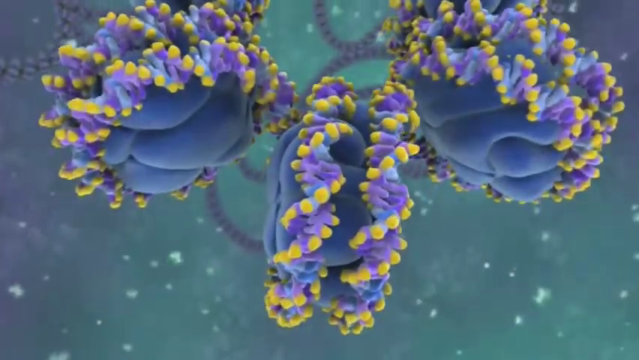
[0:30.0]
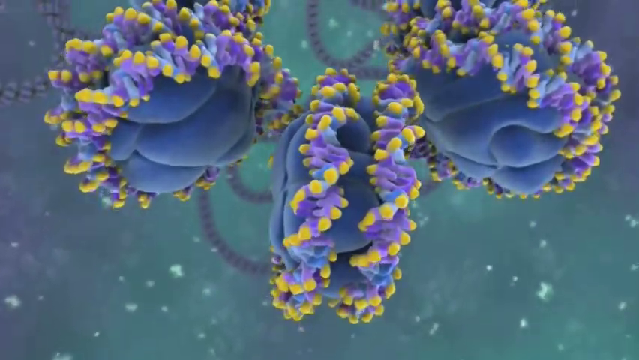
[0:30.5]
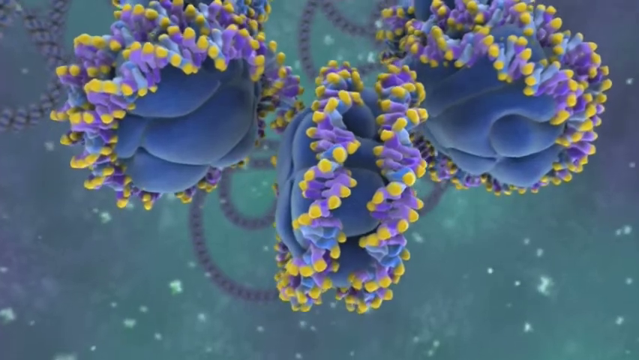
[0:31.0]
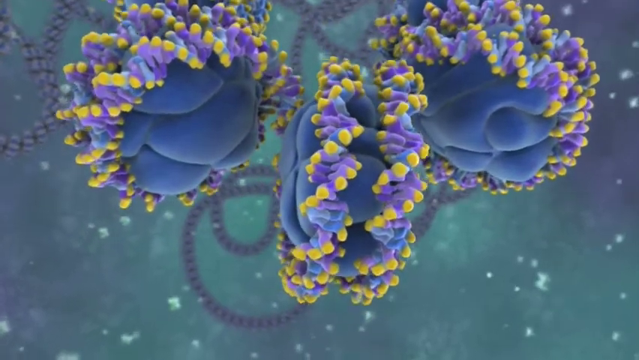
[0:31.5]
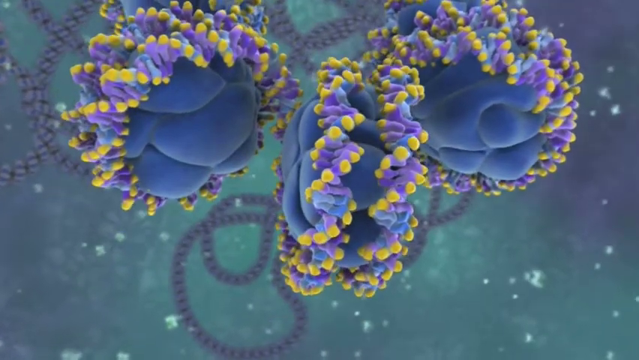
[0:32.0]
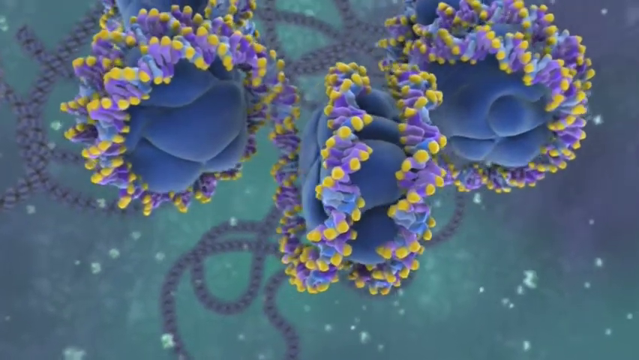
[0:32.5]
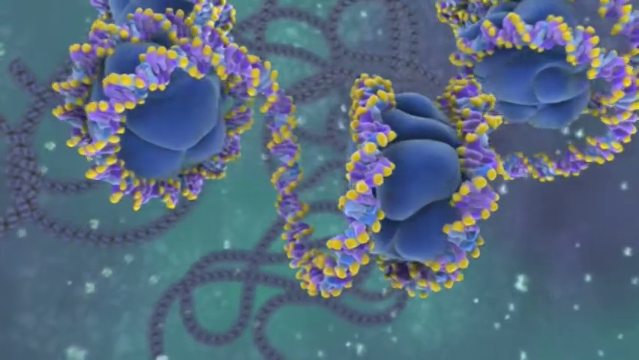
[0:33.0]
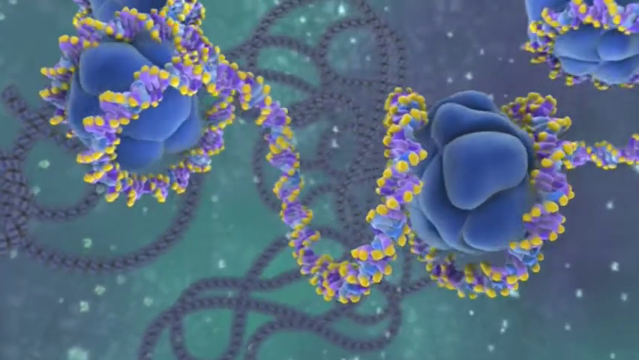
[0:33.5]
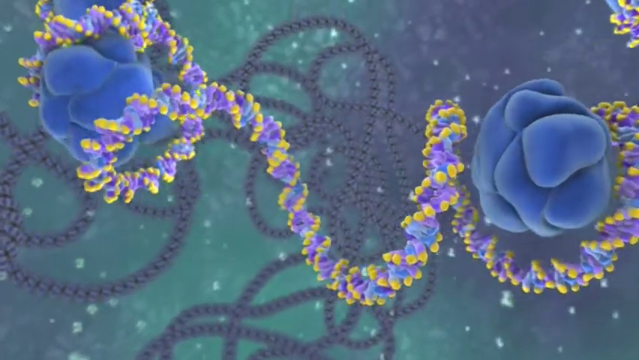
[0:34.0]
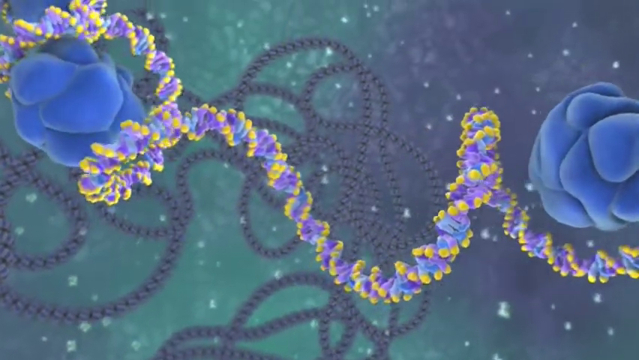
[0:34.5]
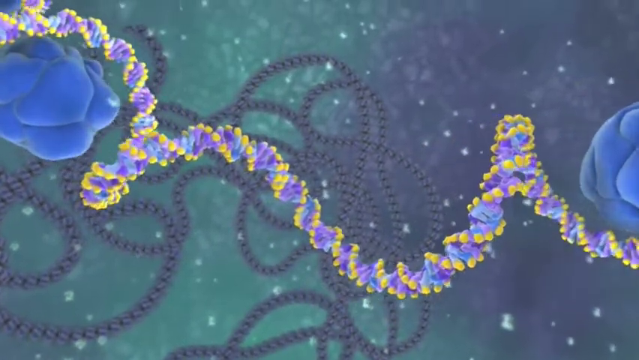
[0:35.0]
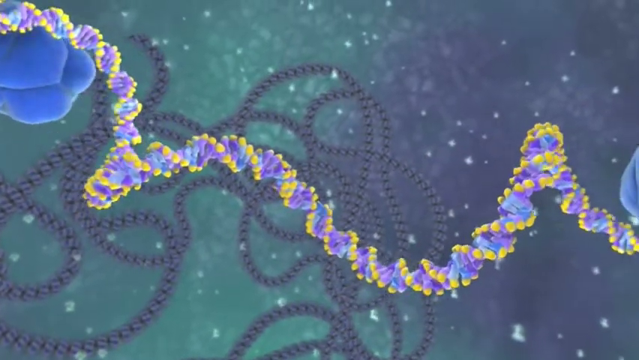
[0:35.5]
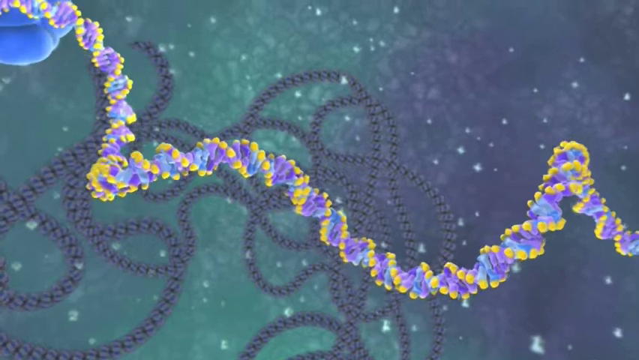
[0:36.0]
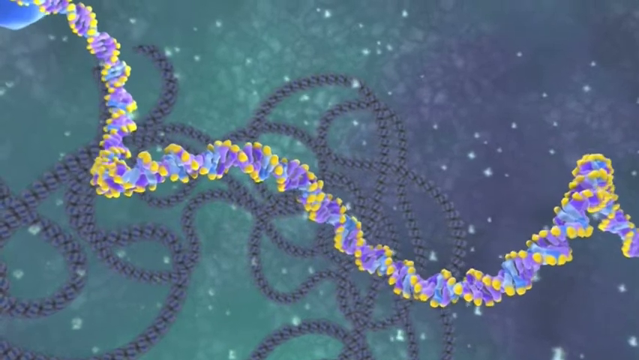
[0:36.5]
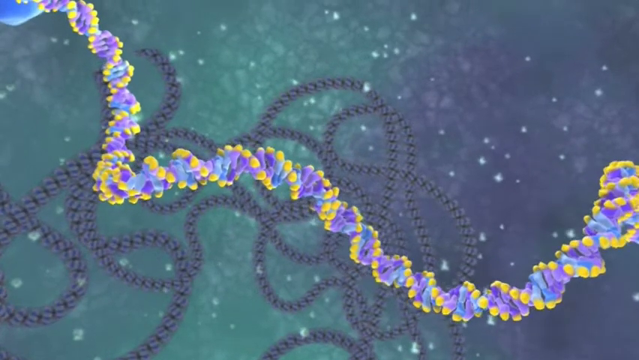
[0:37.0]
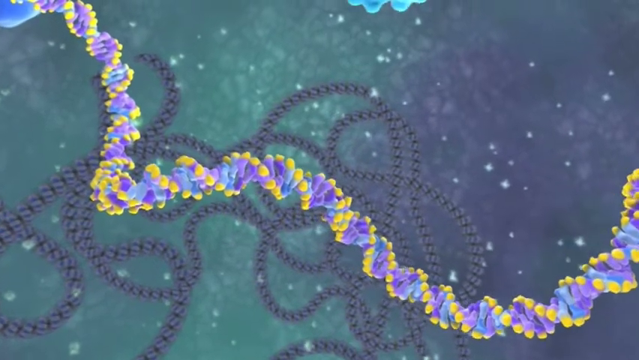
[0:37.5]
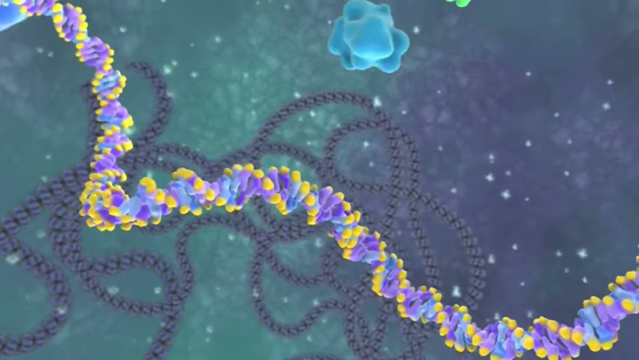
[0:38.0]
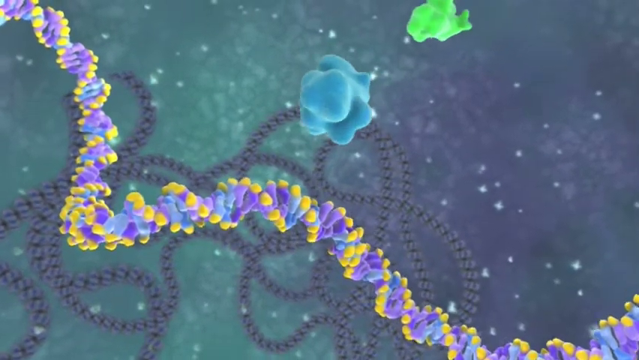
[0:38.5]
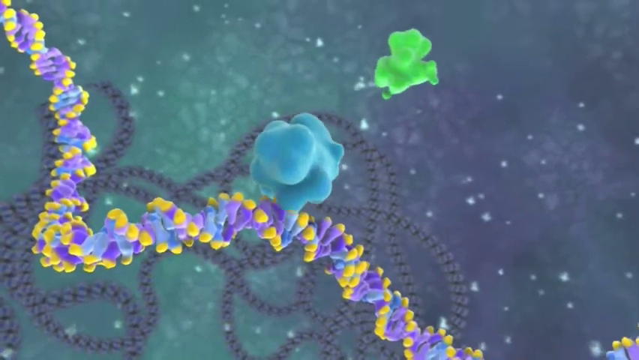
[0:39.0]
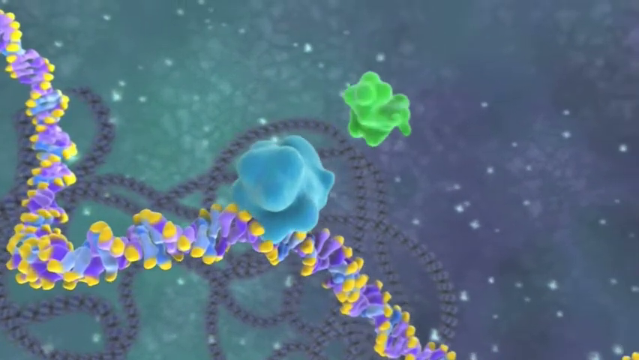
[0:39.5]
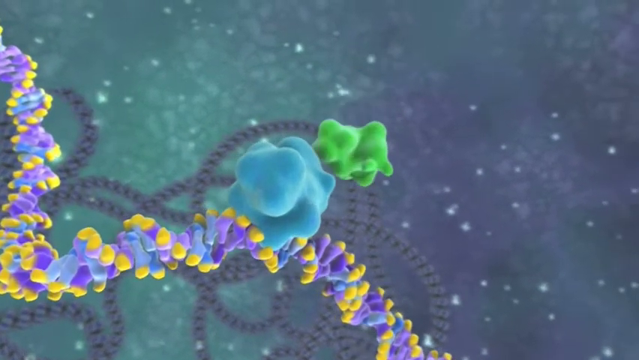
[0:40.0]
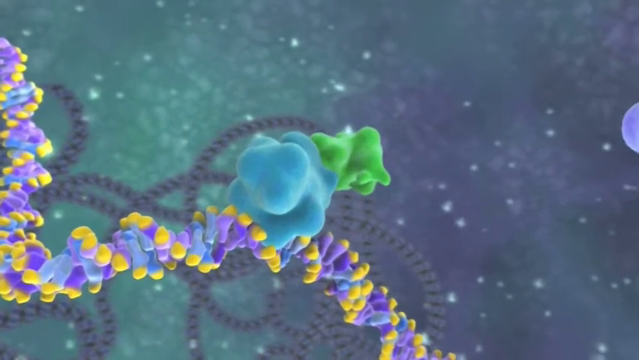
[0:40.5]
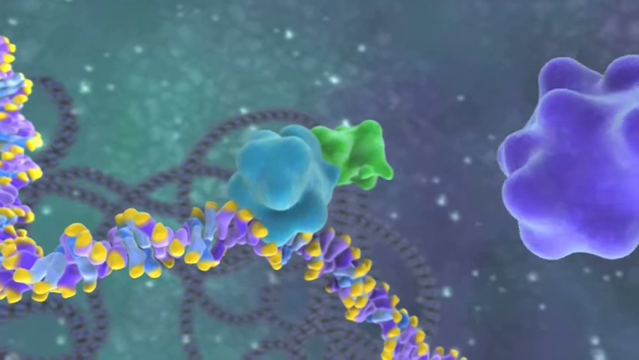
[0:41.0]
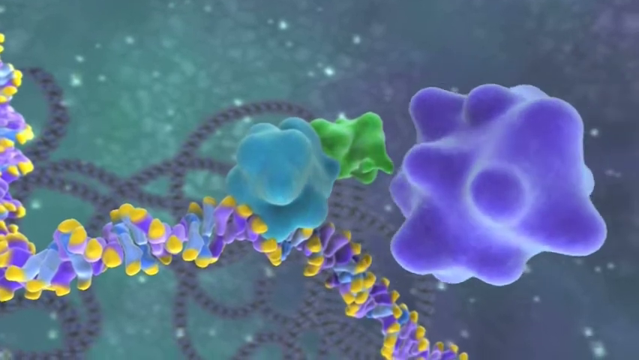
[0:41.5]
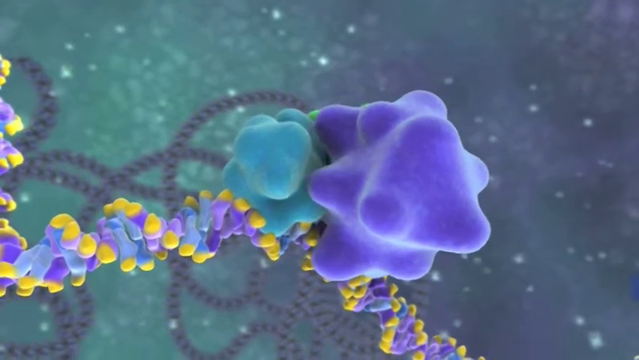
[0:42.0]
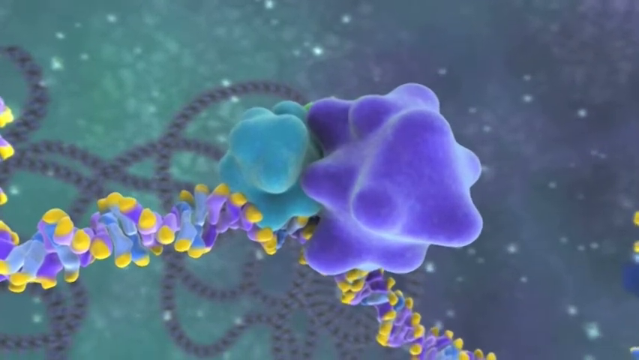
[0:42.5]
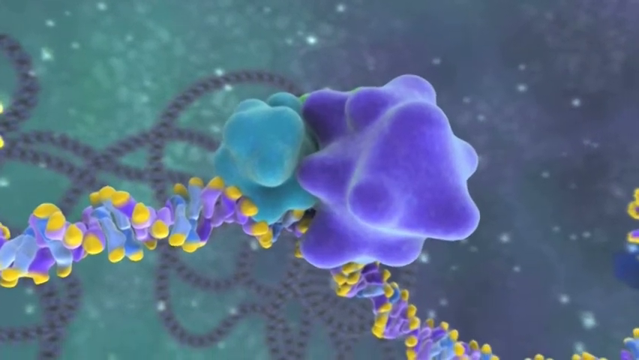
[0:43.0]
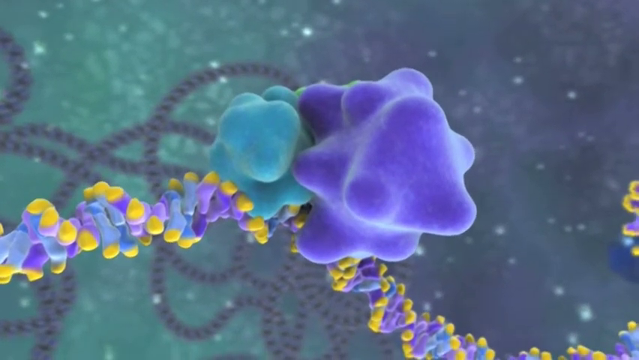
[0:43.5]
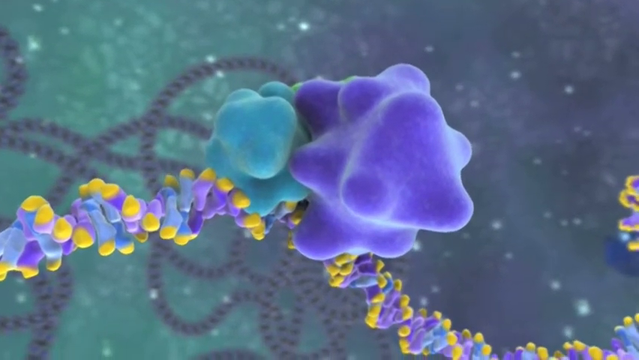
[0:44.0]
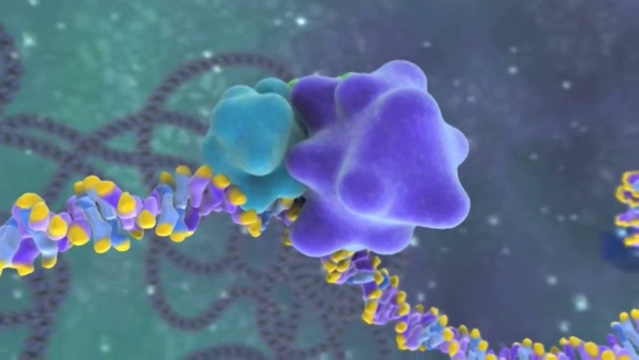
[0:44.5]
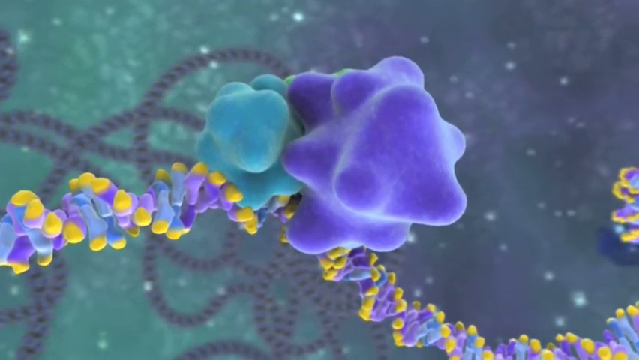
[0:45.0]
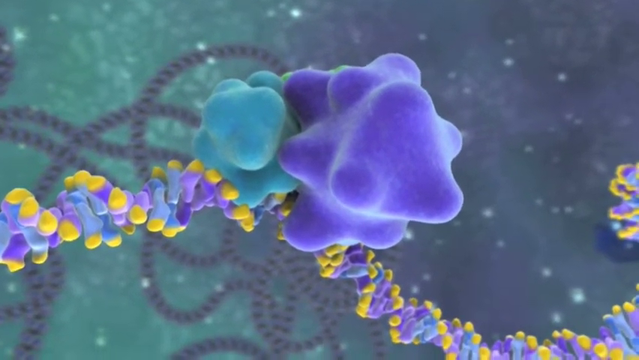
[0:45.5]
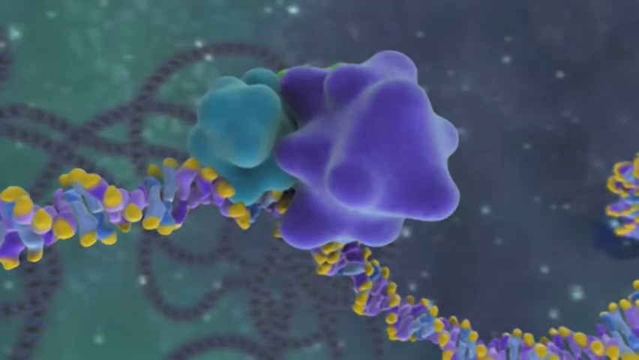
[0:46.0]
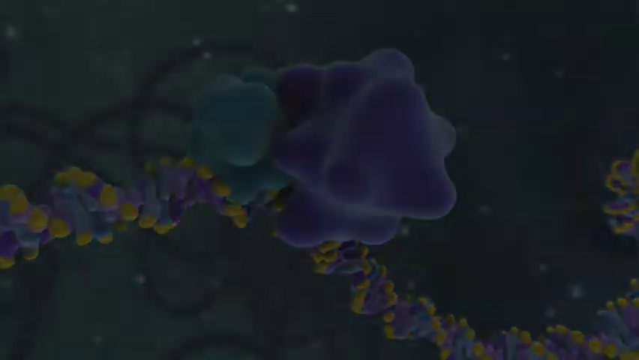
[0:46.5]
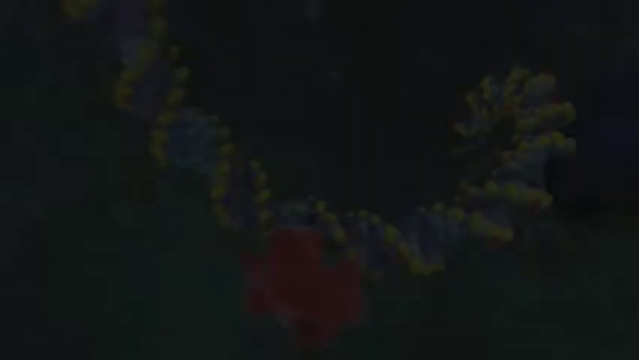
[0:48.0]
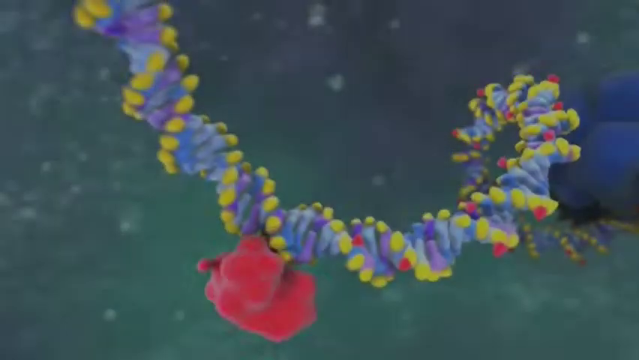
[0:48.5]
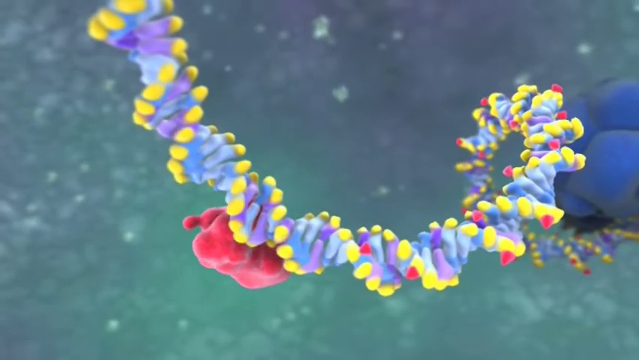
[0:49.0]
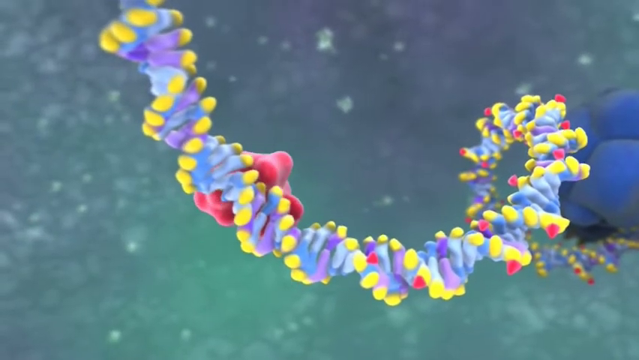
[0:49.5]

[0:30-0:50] A long, coiling, purple, rope-like structure has what are almost like mini yellow balls wrapping diagonally around it in a kind of spiral fashion, and blue balls attached in various places. The rope uncoils itself as a blue blob flies from the top of the screen and attaches itself to the structure, followed swiftly by a small green blob that attaches itself to the blue blob. Suddenly a big purple blob comes into frame from the right and attaches itself to the green blob and the blue blob. The scene then transitions to a similar-looking structure: a purple, rope-like structure with small yellow circles attached in a spiral-like fashion, coiling around it, but this time also with small red dots attached at random places, far less frequently than the yellow dots. From the bottom of the screen, a red blob floats up and attaches itself to the structure.